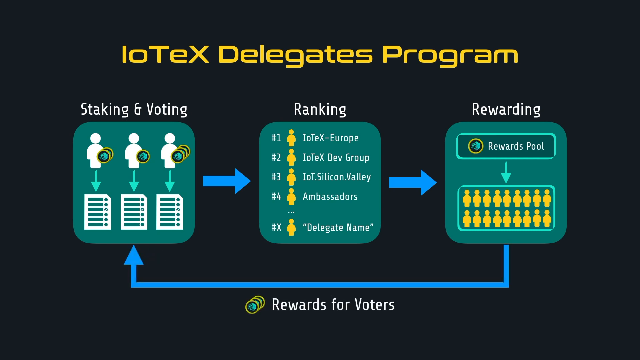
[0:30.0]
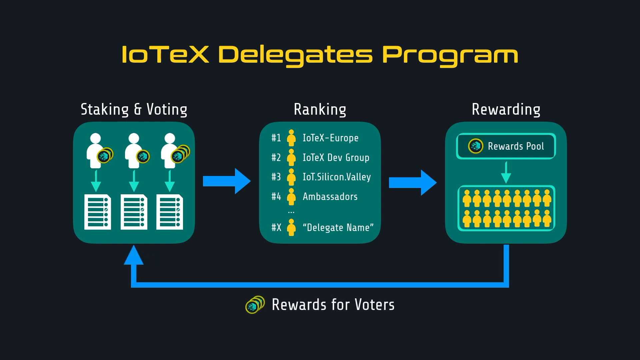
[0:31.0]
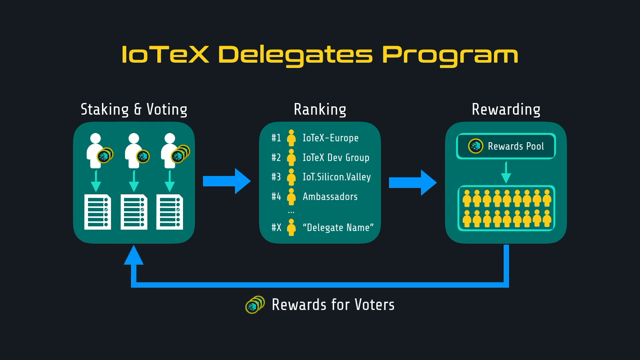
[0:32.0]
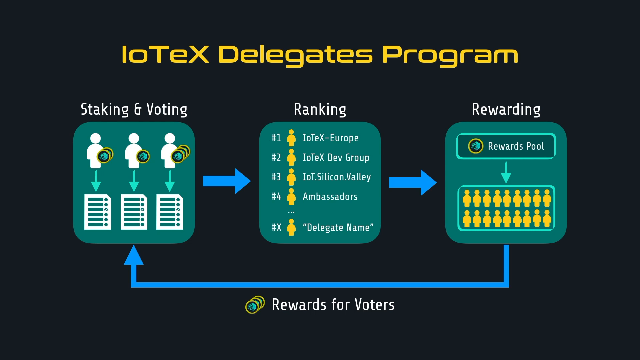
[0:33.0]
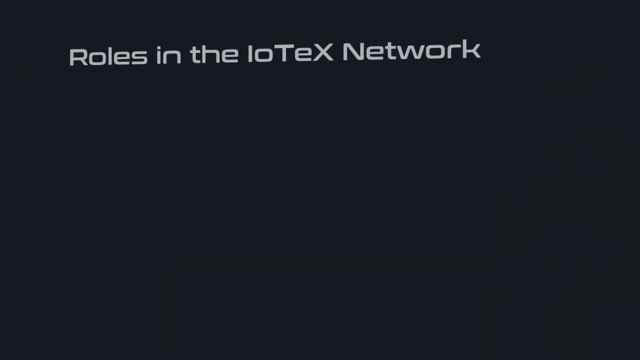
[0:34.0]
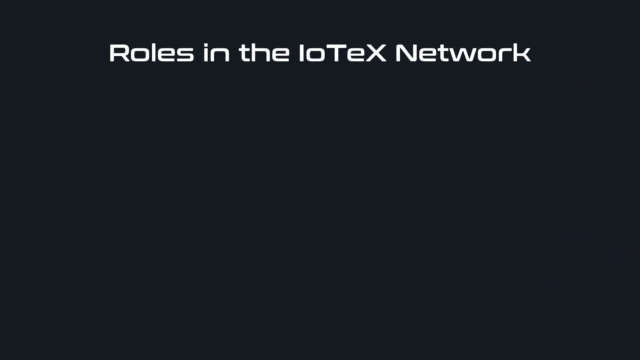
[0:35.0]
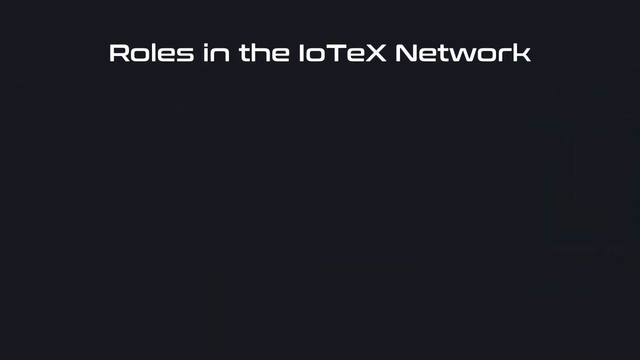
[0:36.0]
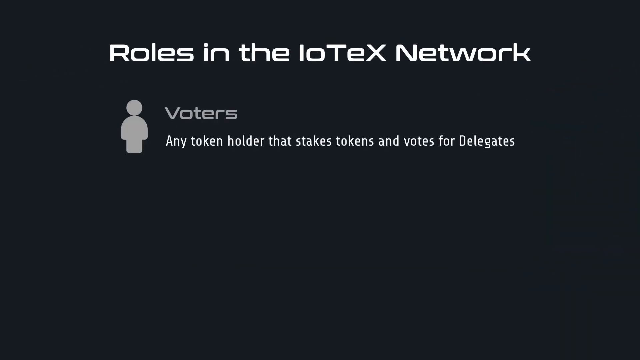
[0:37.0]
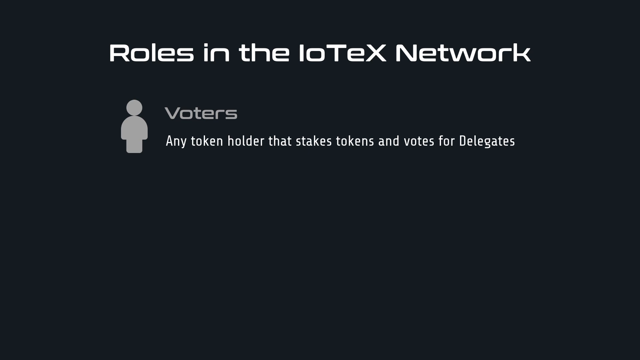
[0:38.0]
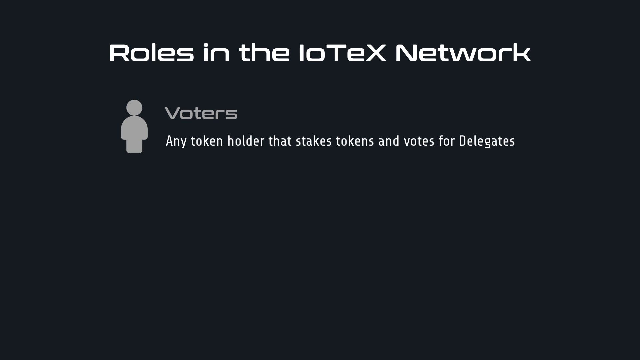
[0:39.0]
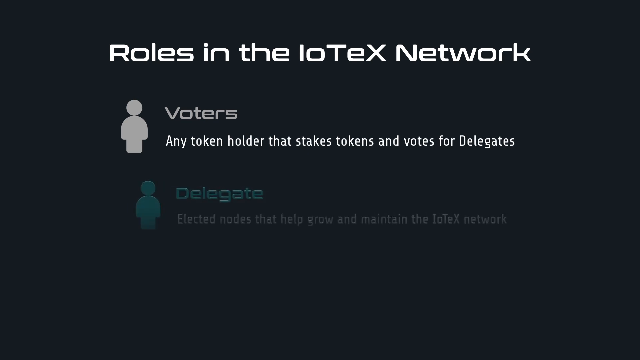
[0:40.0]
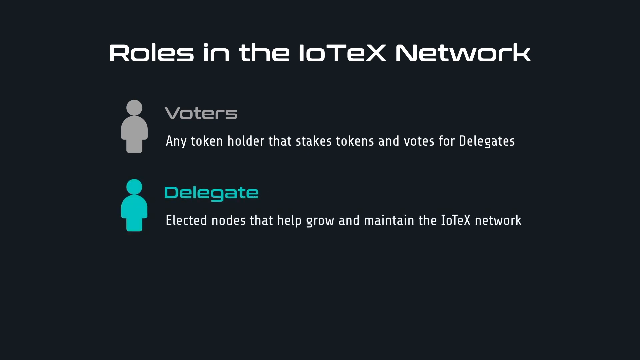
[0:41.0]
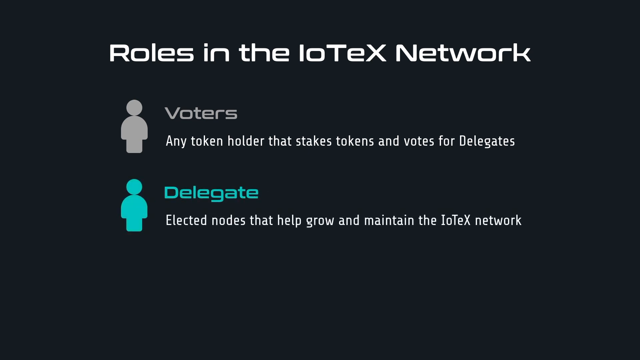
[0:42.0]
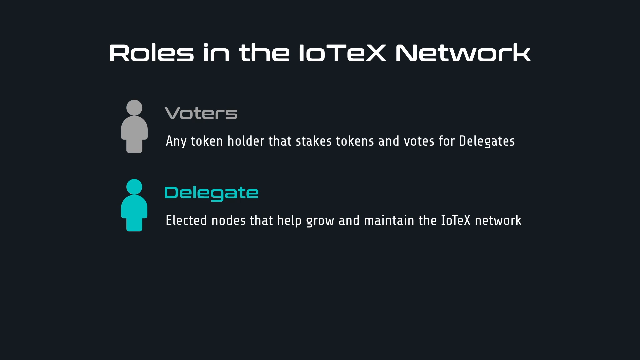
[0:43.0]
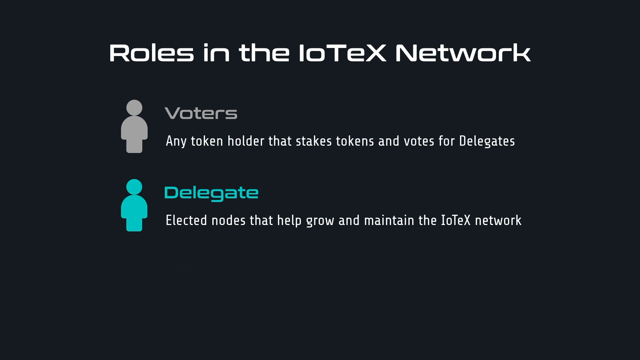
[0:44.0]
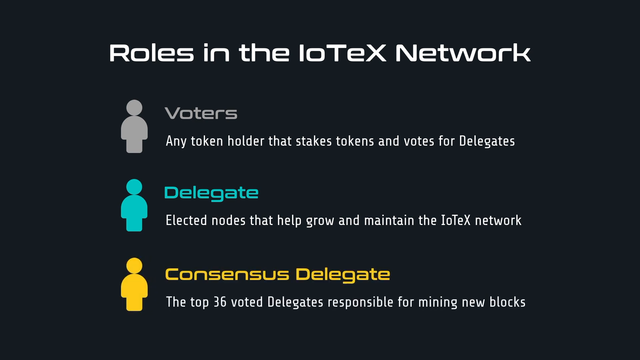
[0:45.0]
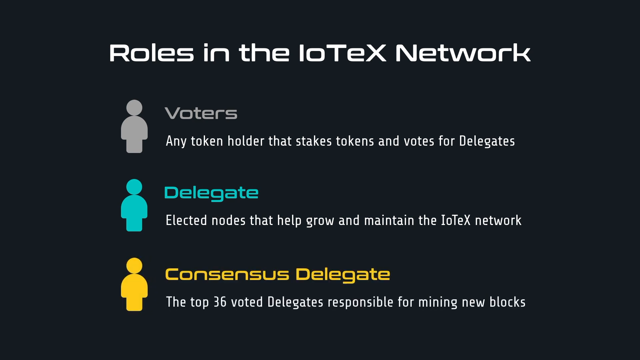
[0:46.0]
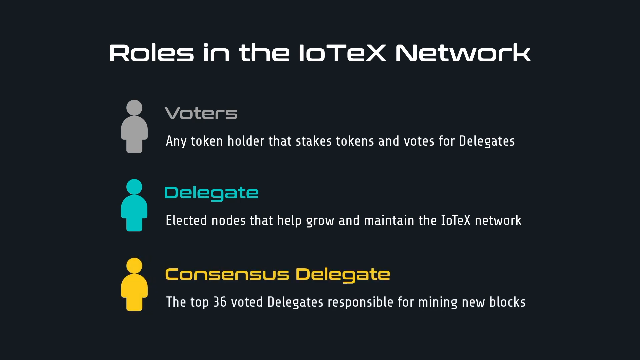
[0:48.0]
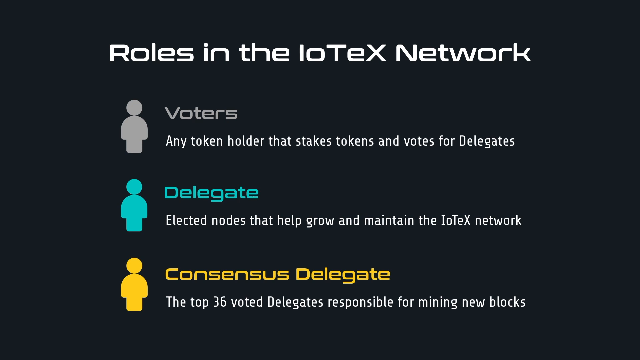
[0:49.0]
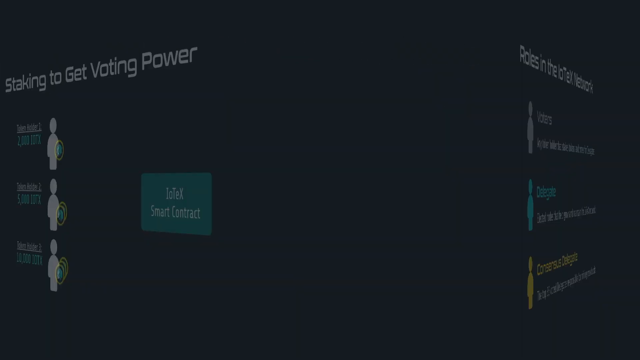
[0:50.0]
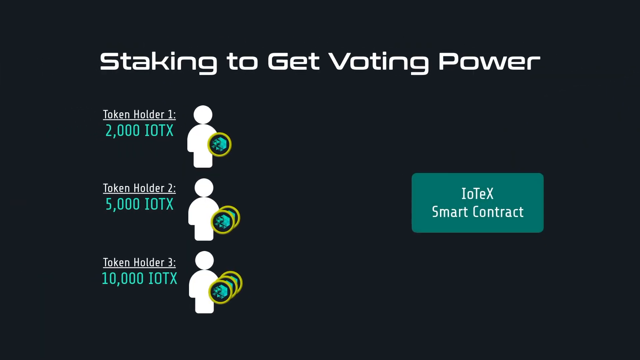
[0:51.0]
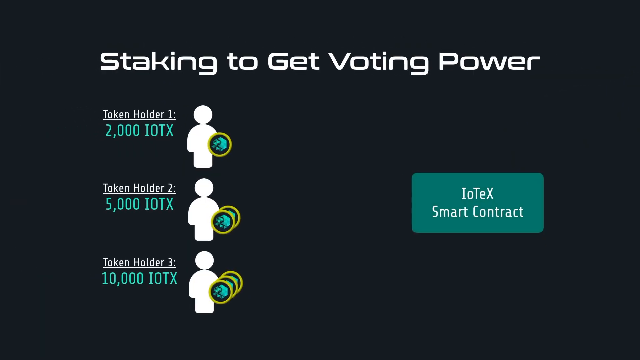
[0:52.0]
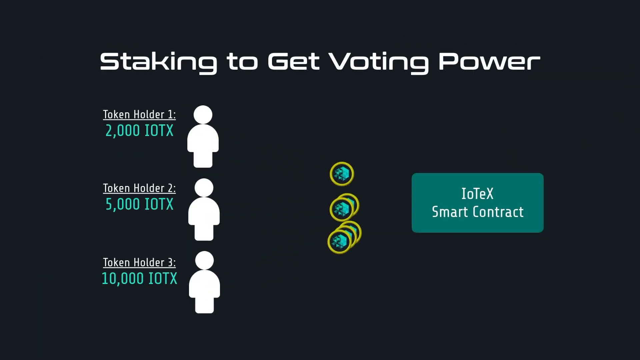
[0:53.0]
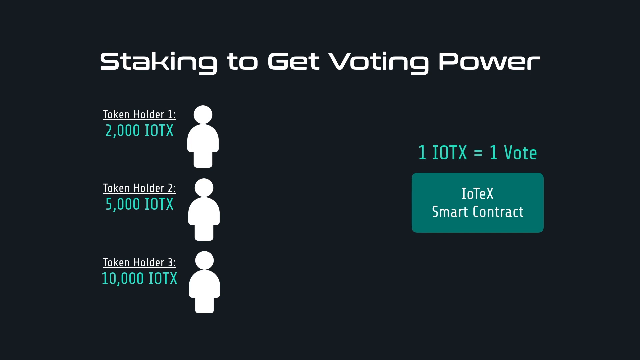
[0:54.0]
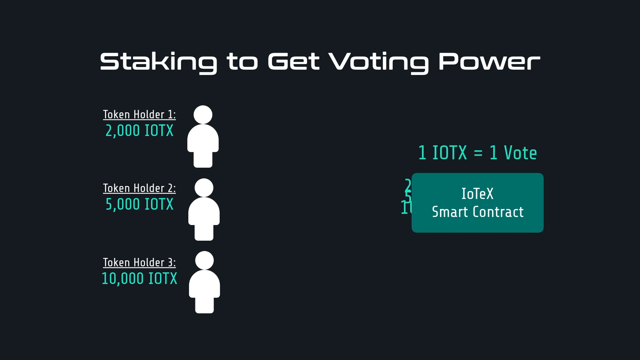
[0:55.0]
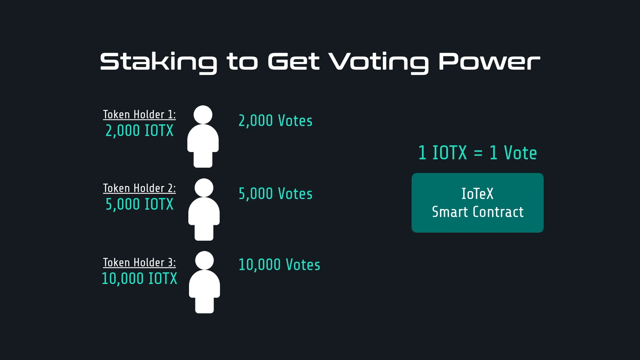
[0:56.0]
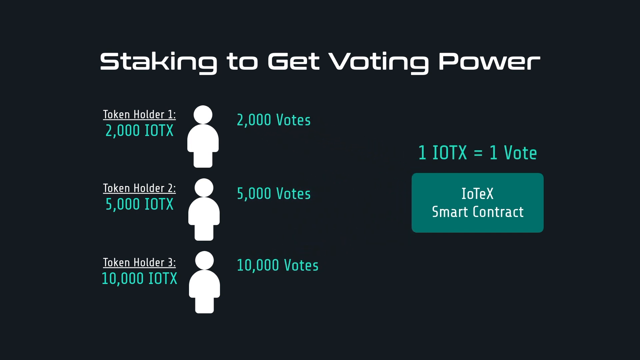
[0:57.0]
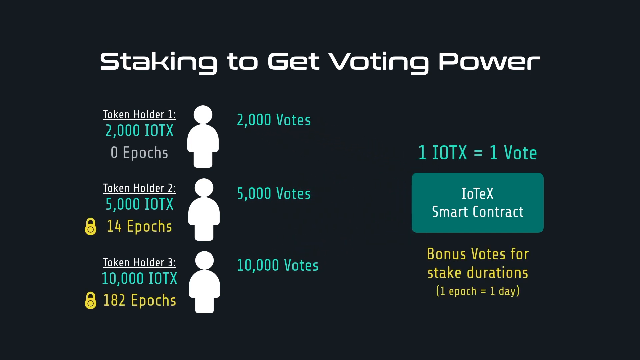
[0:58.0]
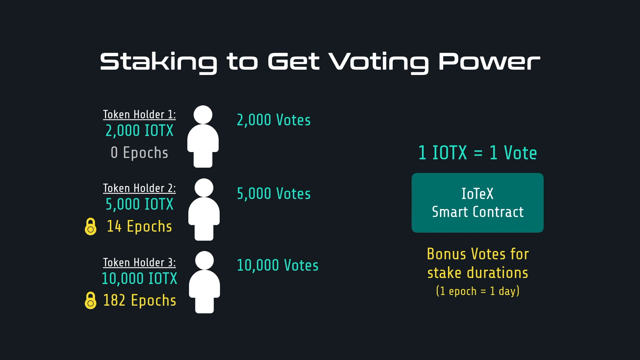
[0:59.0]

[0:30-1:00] An infographic is titled "IoTeX Delegates Program" in yellow. Underneath are three boxes arranged from left to right, titled "Staking and Voting", "Ranking" and "Rewarding". Blue arrows point to the right between them, and from the last box a long arrow points all the way back to the first box. The slide then disappears and another pops in reading "Roles in the IoTeX Network" in white text. Underneath is the text "Voters" in gray with an icon of a gray human-like figure that has a circle for a head and a body. Below that, text in a turquoise green reads "Delegate", with white text underneath and a turquoise green stick figure. At the bottom is another one that is yellow, reading "Consensus Delegate", with another figure that looks turquoise green as well and white text underneath.